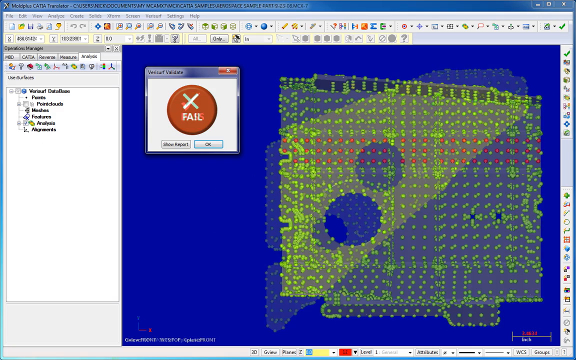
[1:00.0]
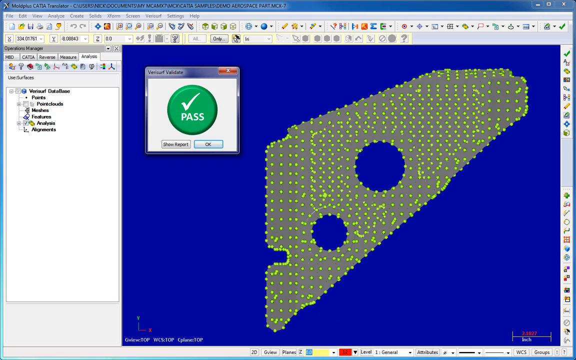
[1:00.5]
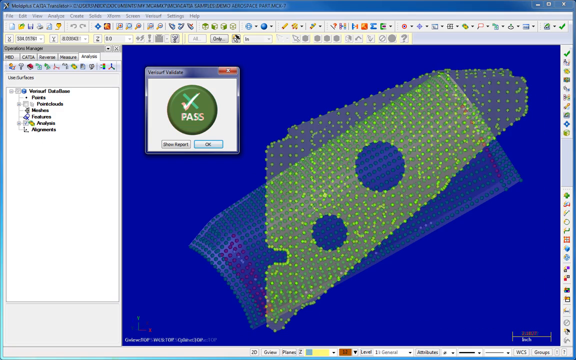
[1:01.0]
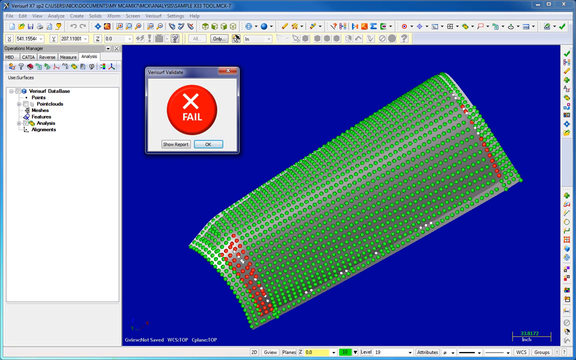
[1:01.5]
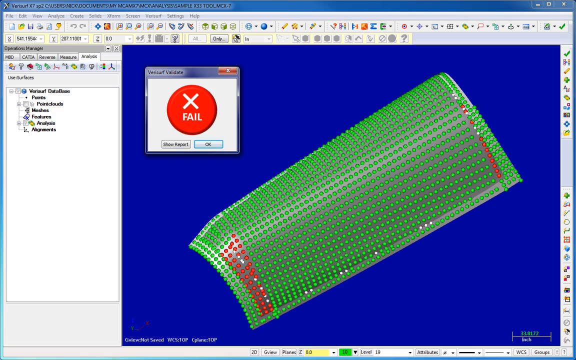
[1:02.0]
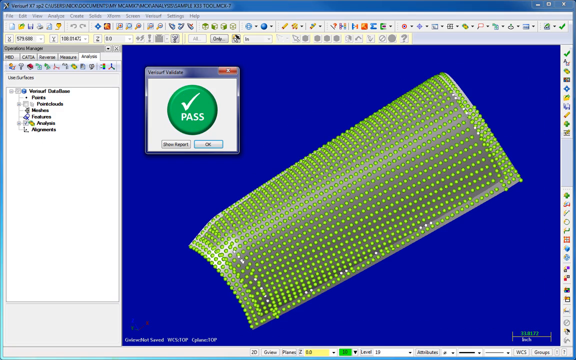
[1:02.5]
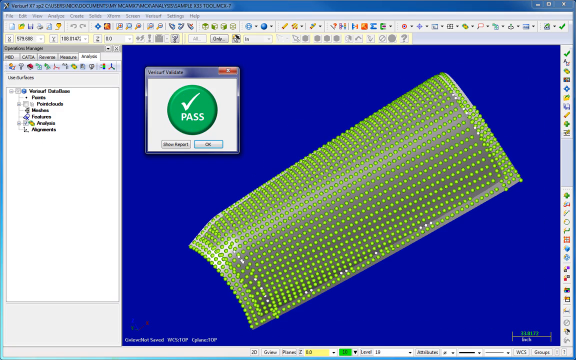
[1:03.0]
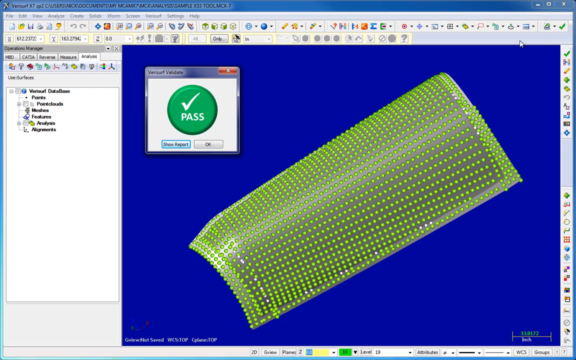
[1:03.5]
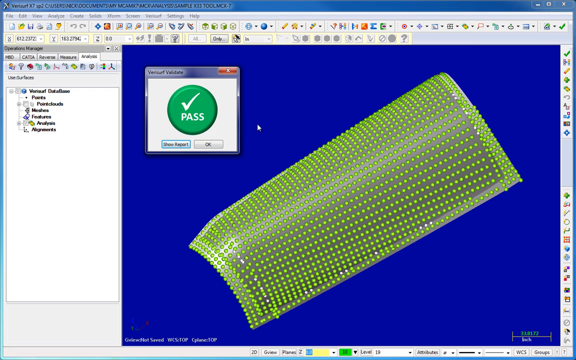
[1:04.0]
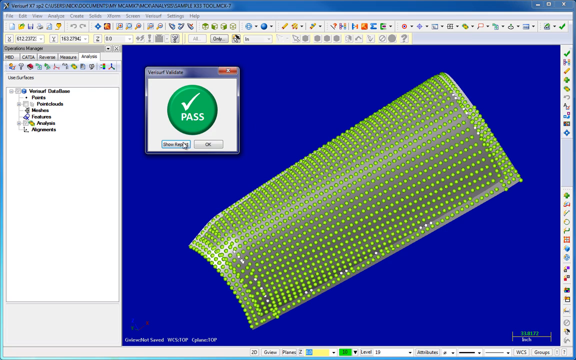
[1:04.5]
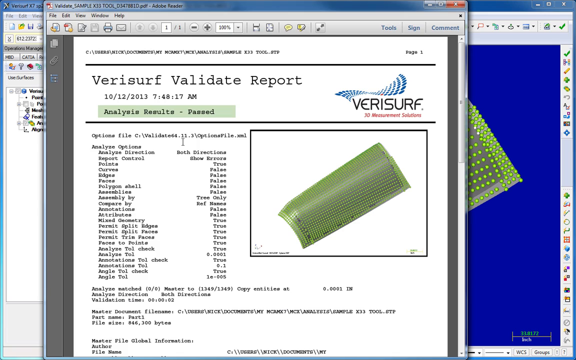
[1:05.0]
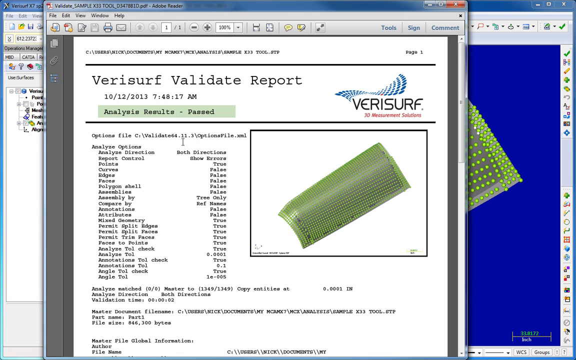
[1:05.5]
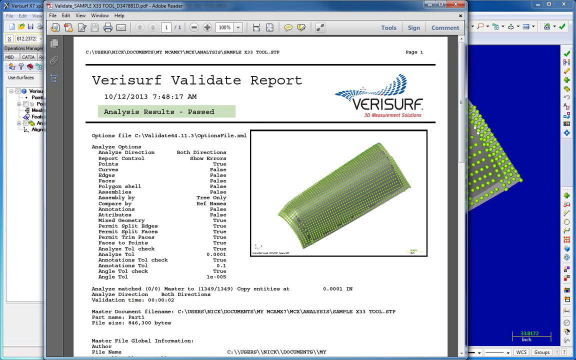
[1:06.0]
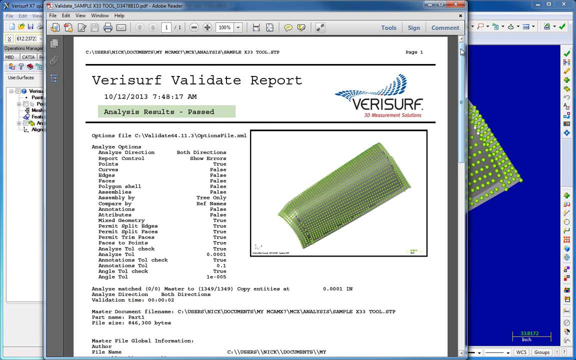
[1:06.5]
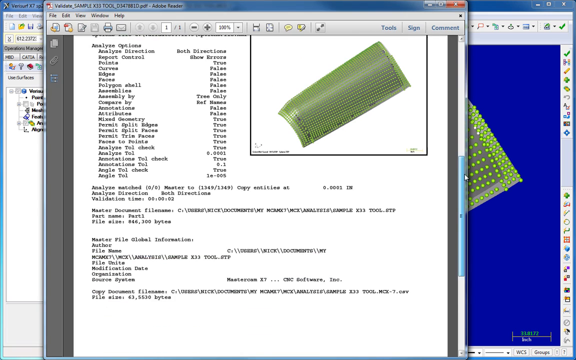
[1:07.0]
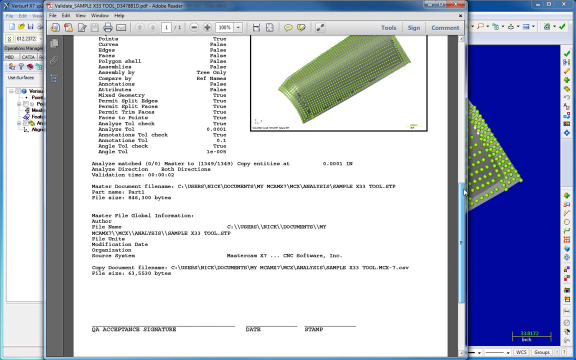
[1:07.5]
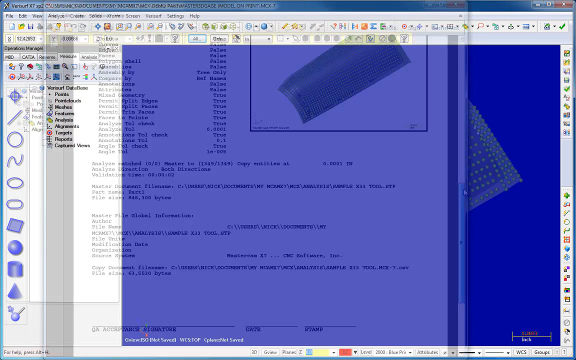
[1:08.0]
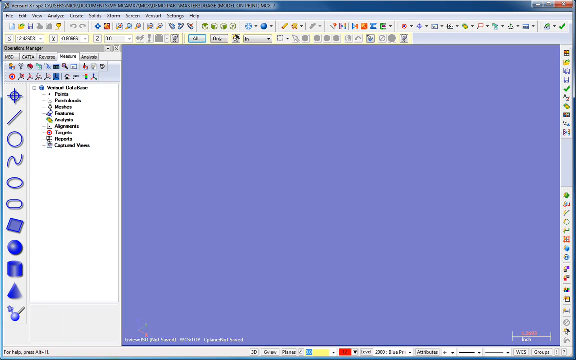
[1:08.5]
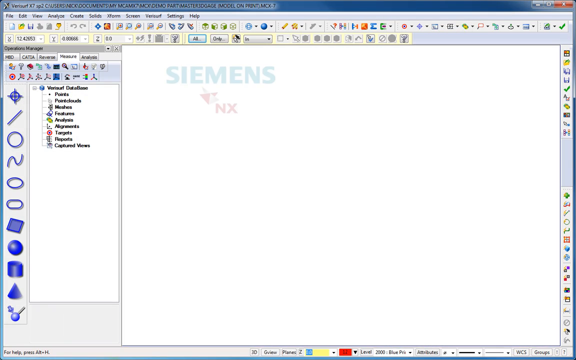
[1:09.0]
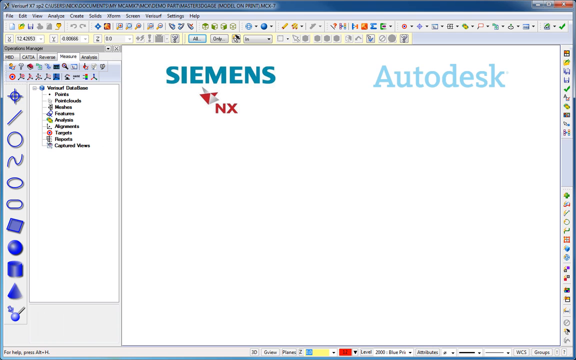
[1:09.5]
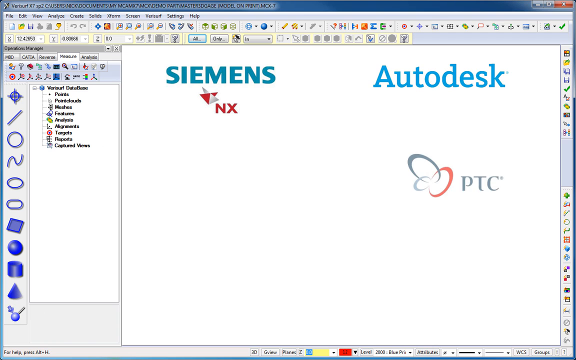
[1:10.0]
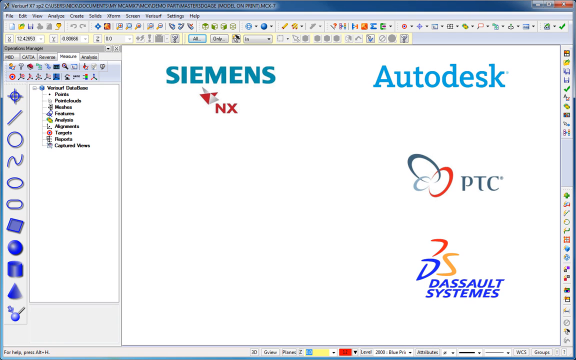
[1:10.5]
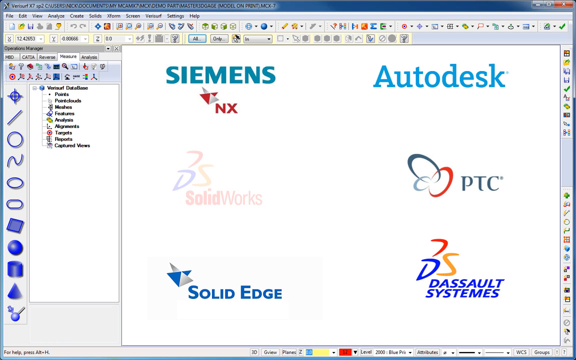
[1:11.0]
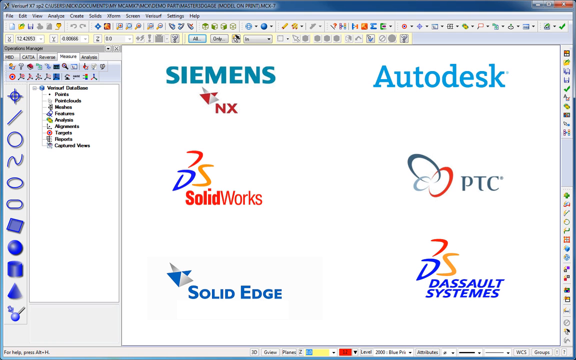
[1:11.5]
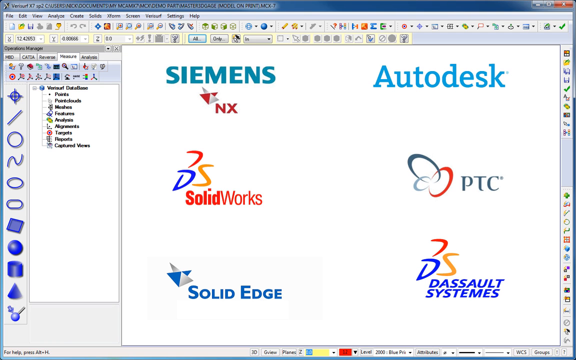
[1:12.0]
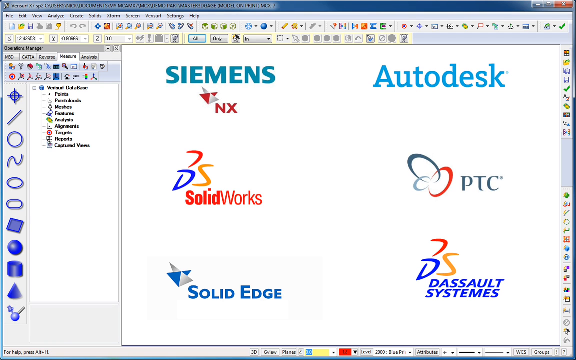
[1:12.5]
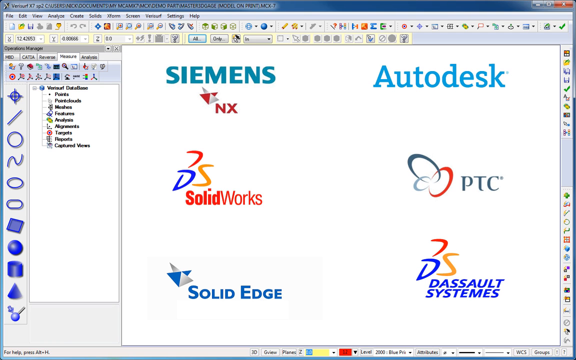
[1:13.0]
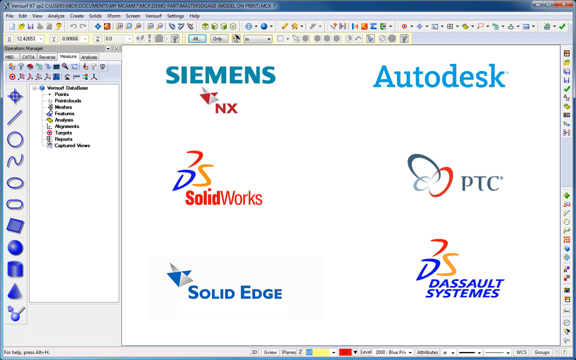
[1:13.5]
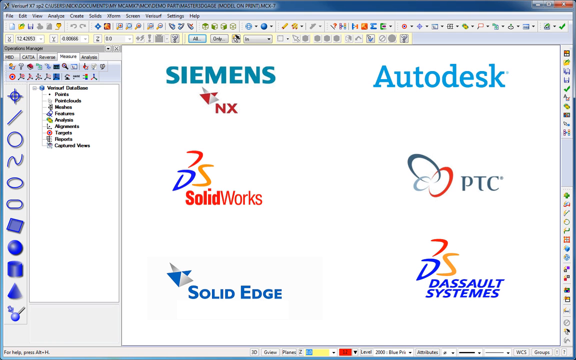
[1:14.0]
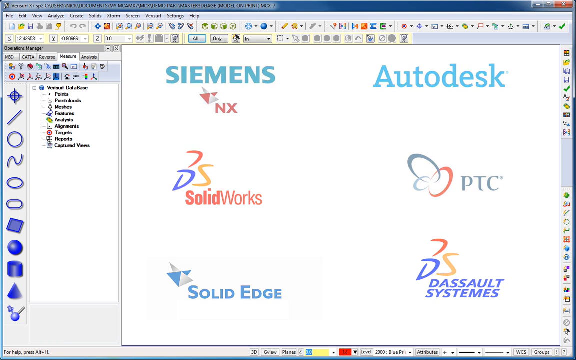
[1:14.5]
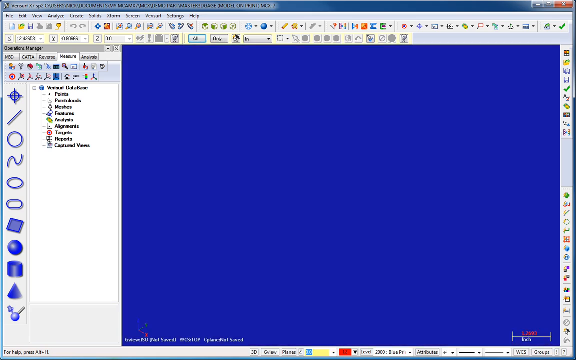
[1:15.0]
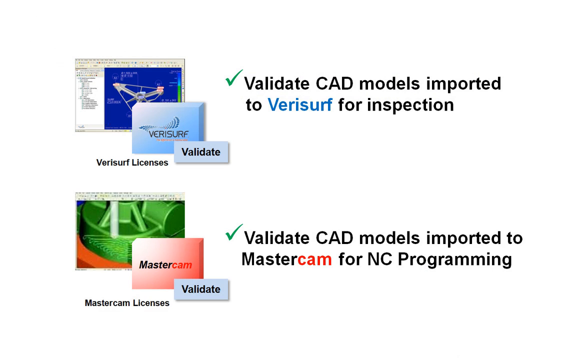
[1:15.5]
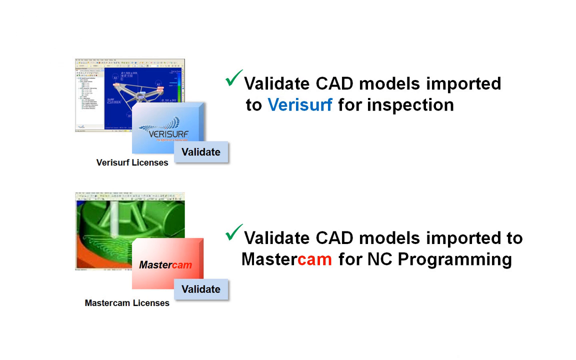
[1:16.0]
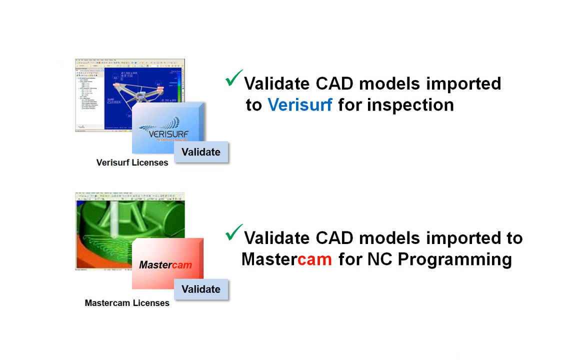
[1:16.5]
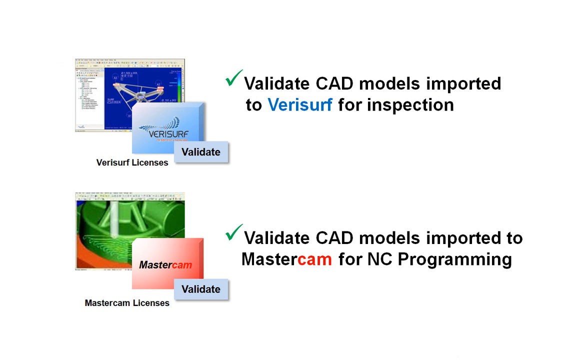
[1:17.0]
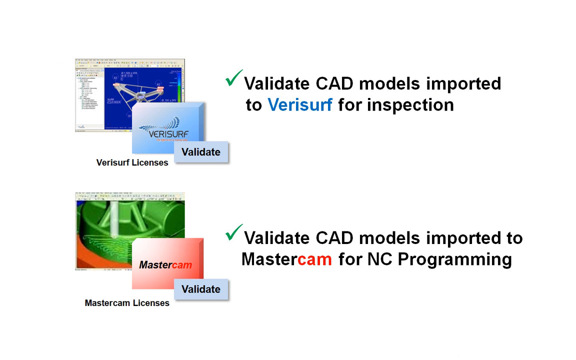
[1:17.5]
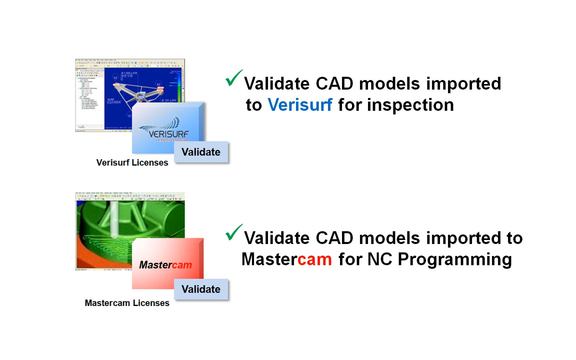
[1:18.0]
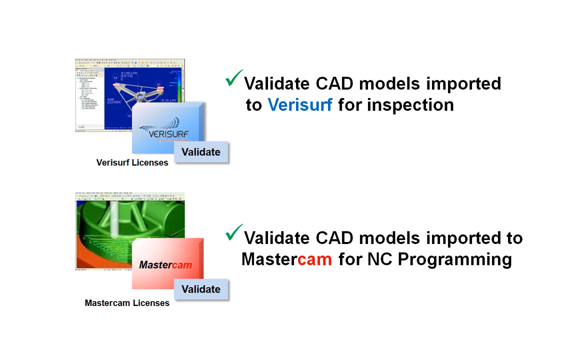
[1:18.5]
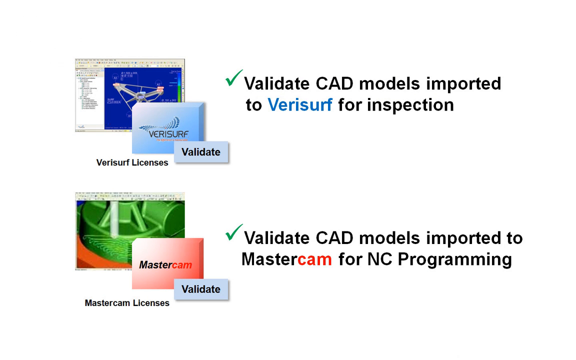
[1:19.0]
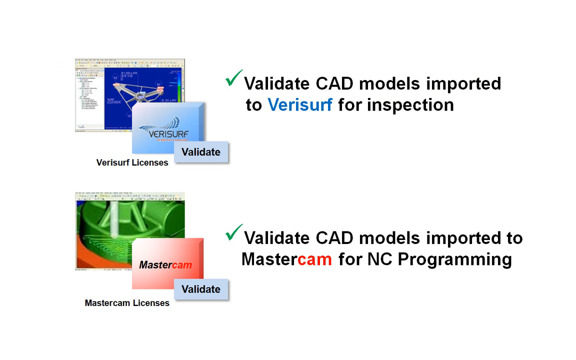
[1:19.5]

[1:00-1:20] The same software is shown, followed by a typical verification report, in which a part appears to be checked from multiple directions. The names of the companies Verisurf and Mastercam are shown, apparently as part of the company's offerings. Several more companies appear, including Autodesk and other CAD software manufacturers that seemingly utilize Verisurf and Mastercam.